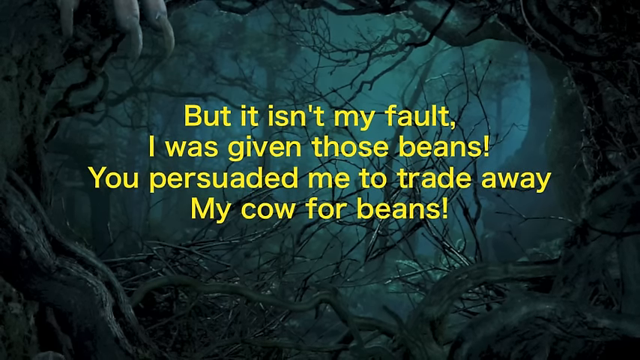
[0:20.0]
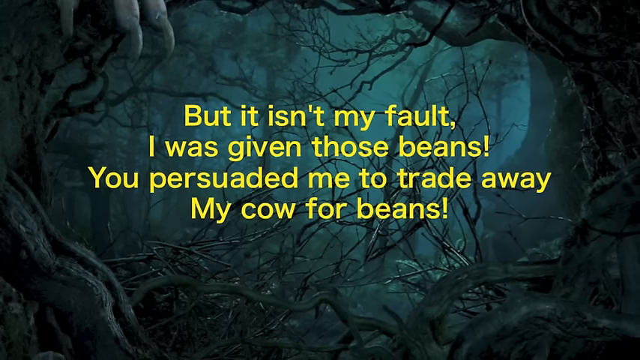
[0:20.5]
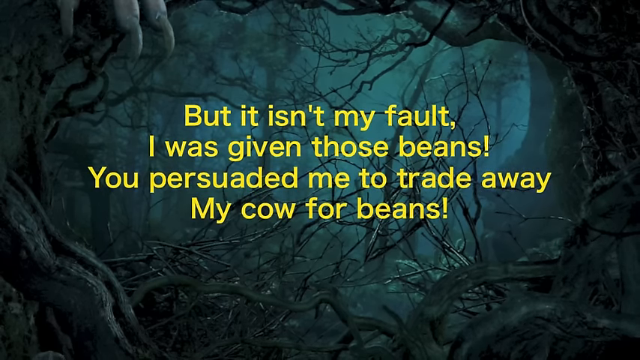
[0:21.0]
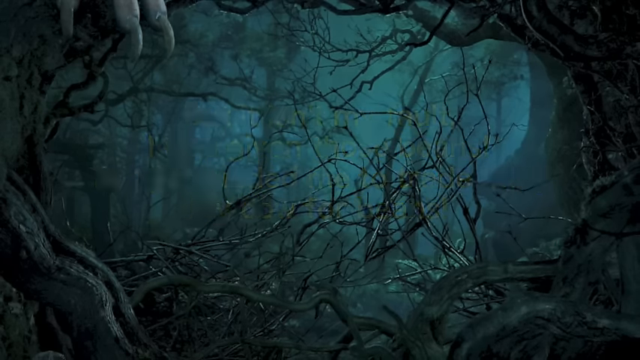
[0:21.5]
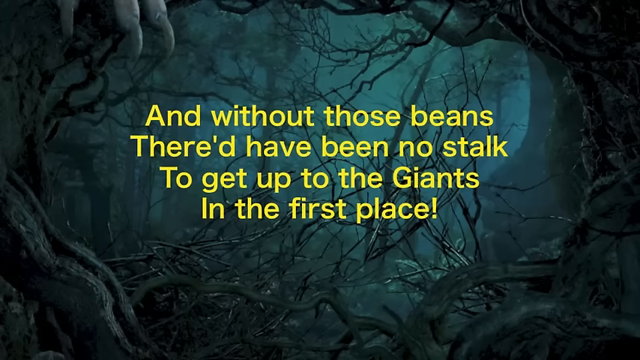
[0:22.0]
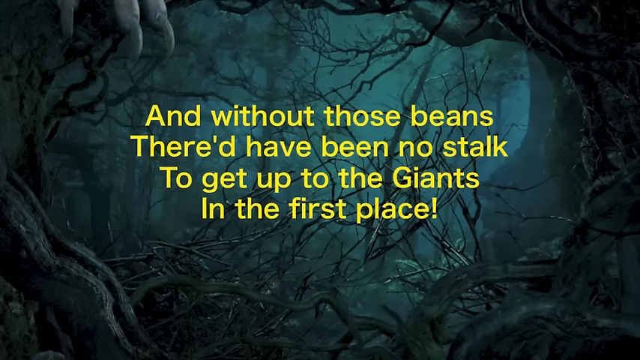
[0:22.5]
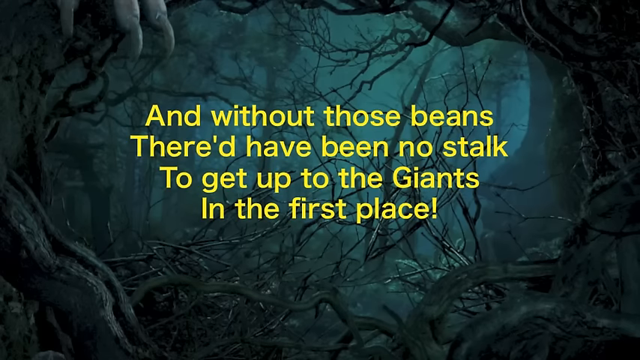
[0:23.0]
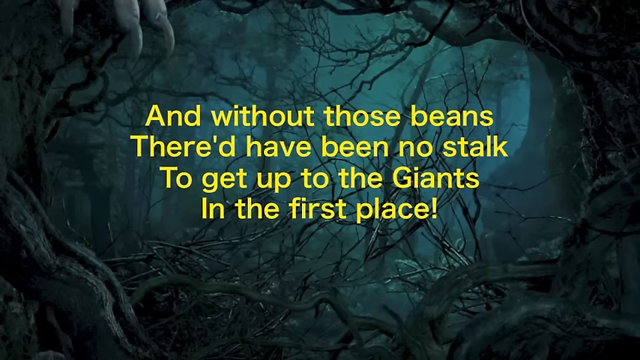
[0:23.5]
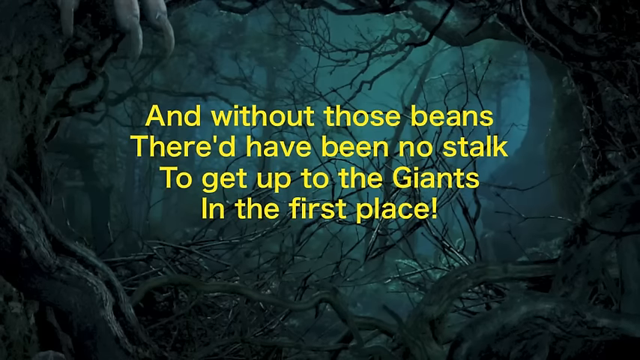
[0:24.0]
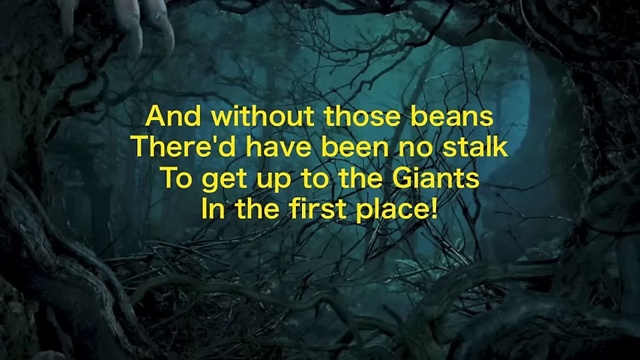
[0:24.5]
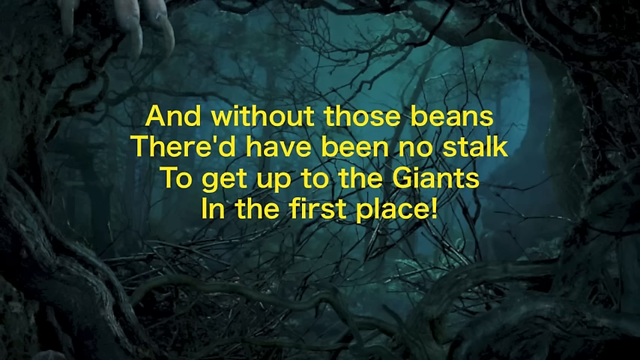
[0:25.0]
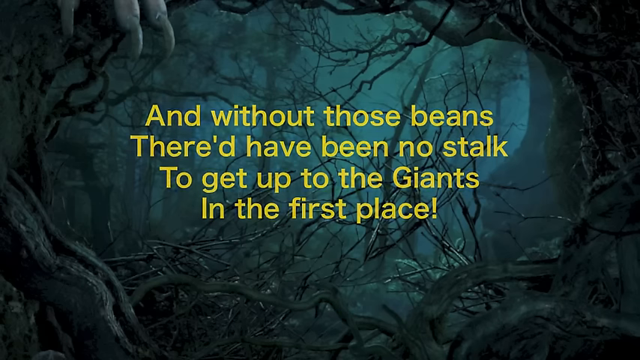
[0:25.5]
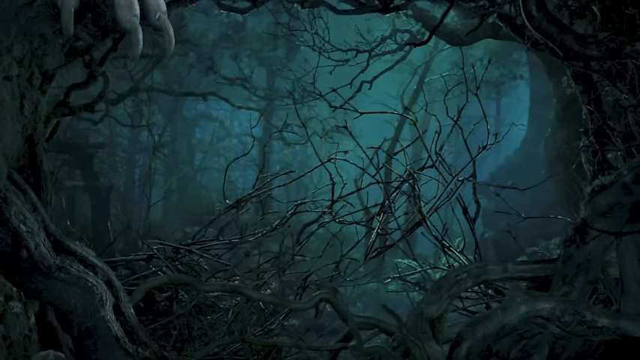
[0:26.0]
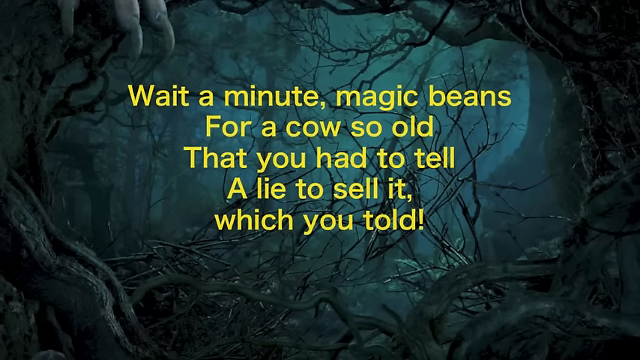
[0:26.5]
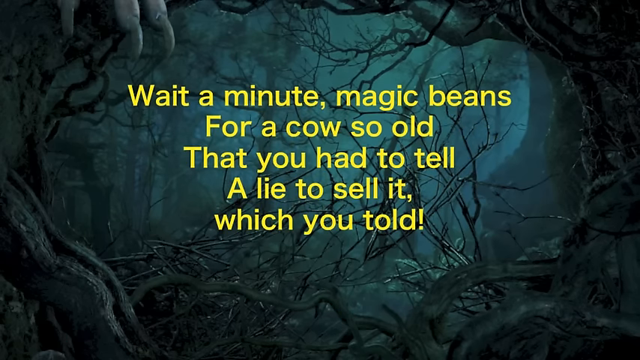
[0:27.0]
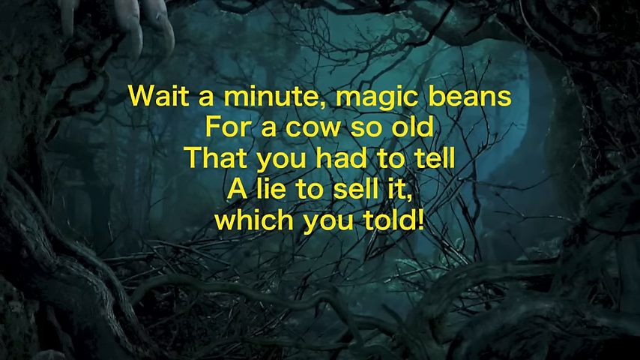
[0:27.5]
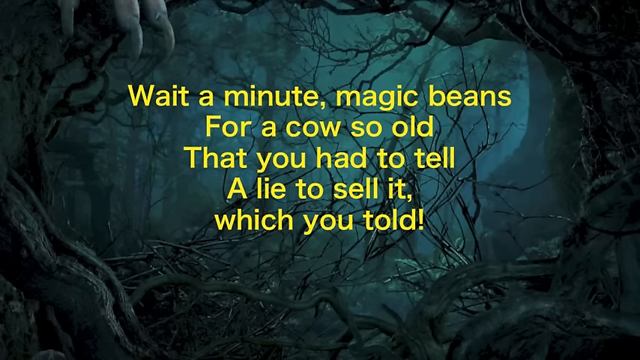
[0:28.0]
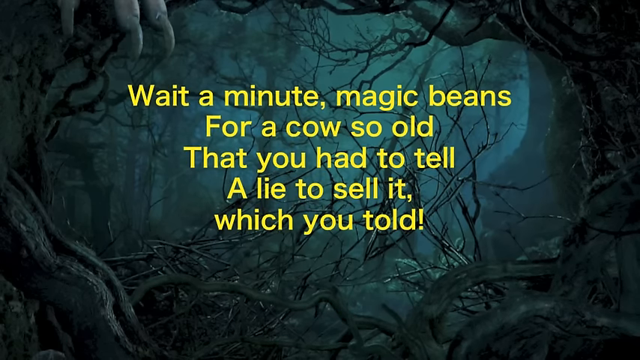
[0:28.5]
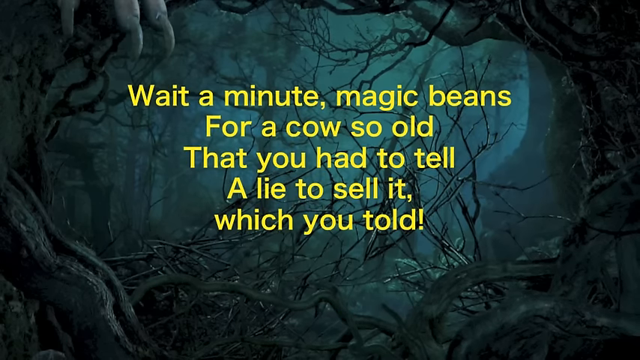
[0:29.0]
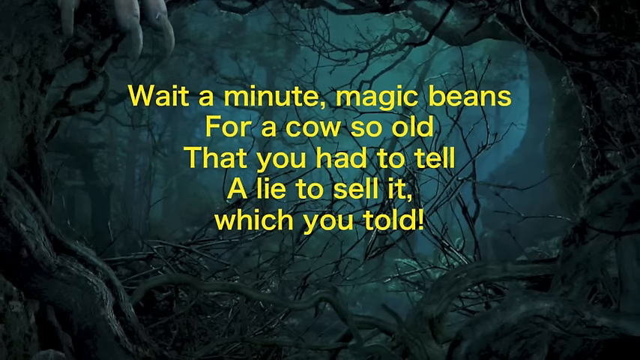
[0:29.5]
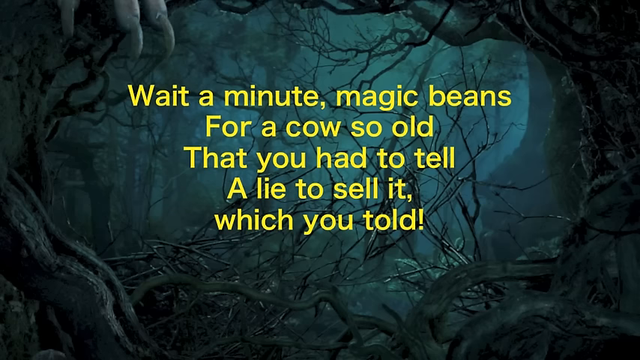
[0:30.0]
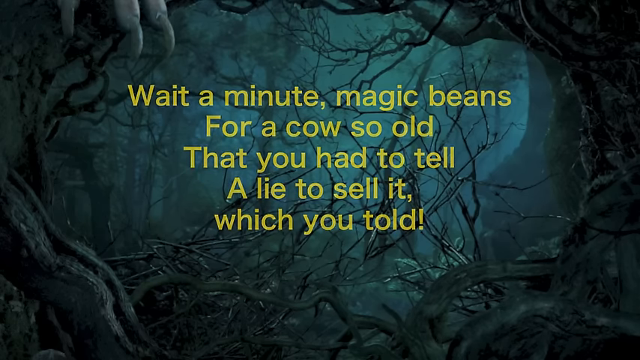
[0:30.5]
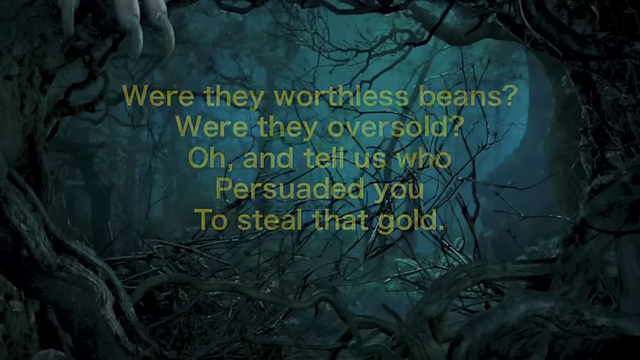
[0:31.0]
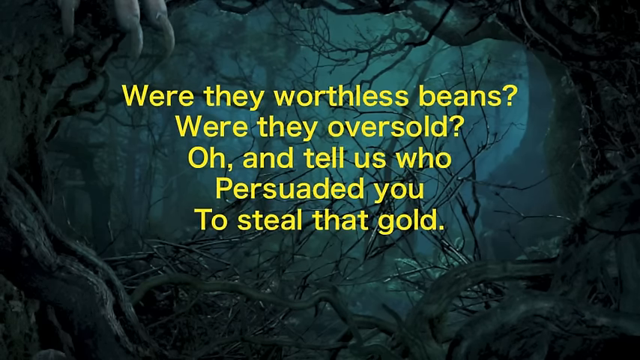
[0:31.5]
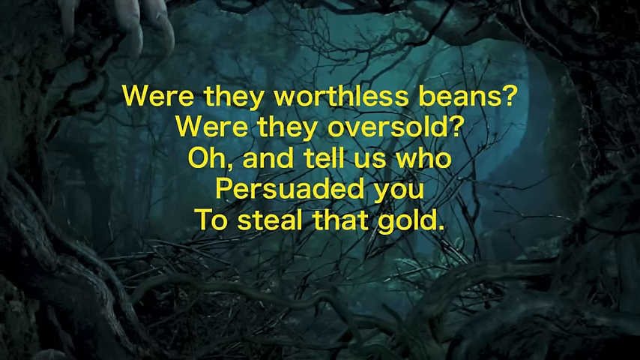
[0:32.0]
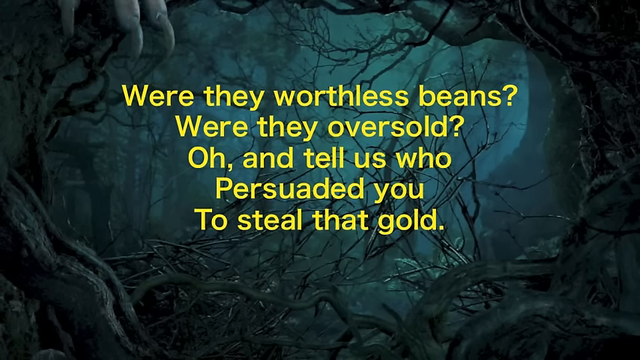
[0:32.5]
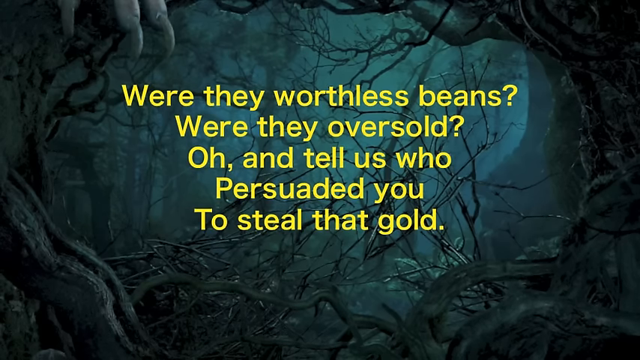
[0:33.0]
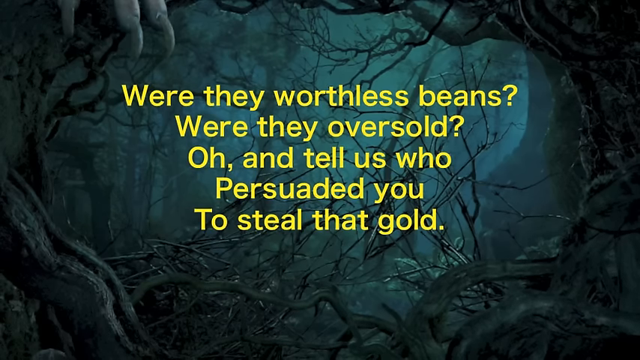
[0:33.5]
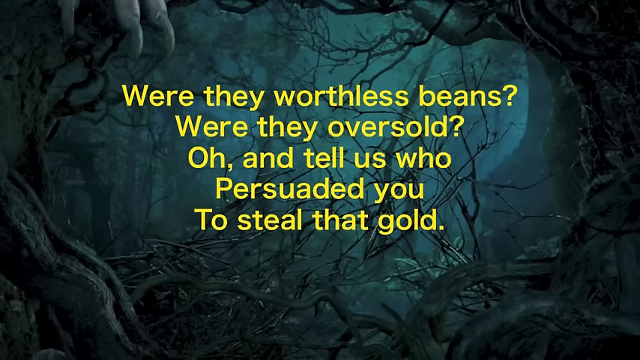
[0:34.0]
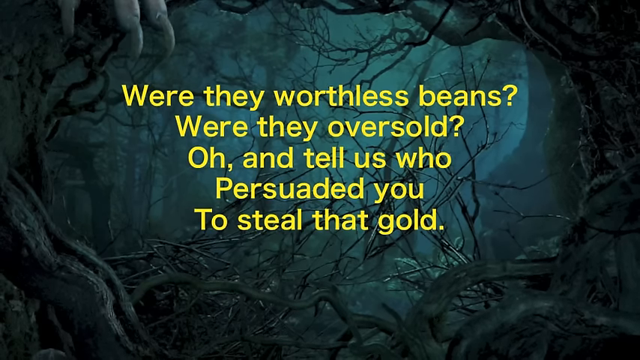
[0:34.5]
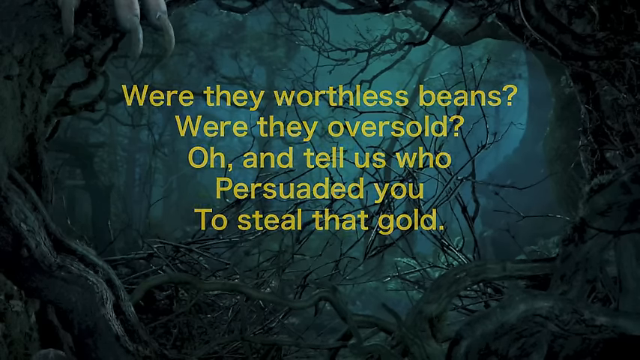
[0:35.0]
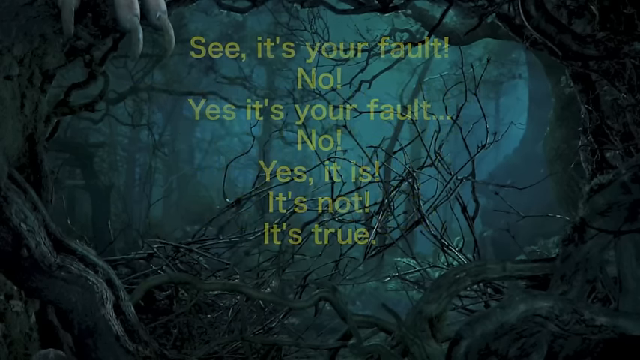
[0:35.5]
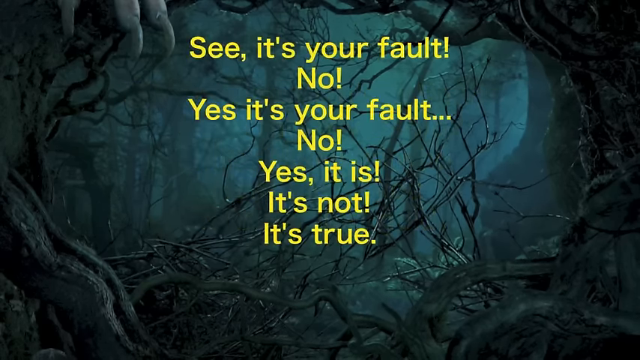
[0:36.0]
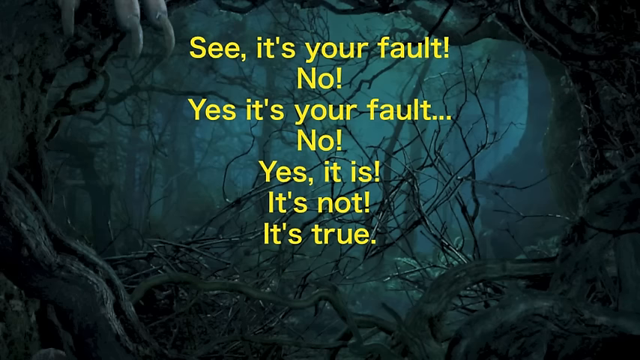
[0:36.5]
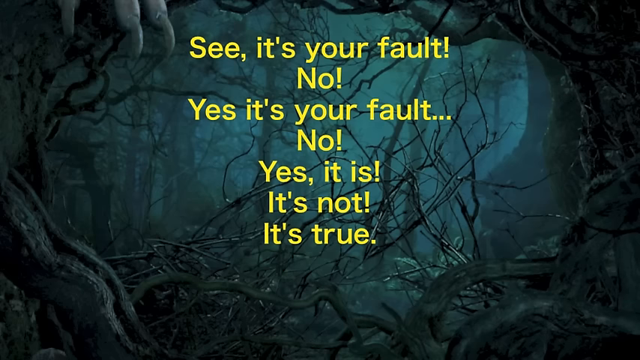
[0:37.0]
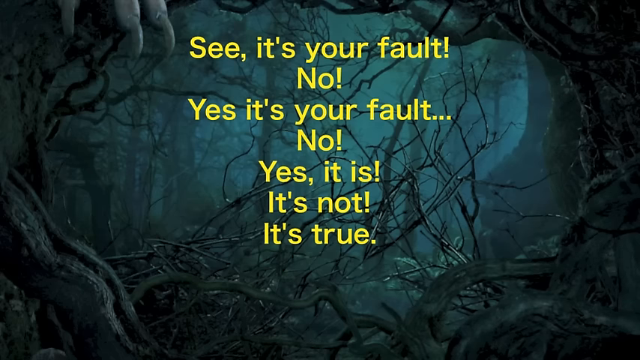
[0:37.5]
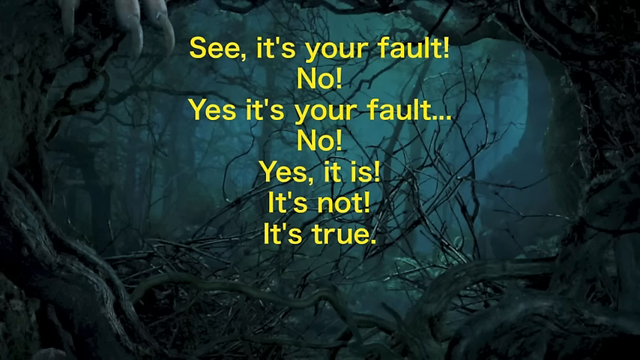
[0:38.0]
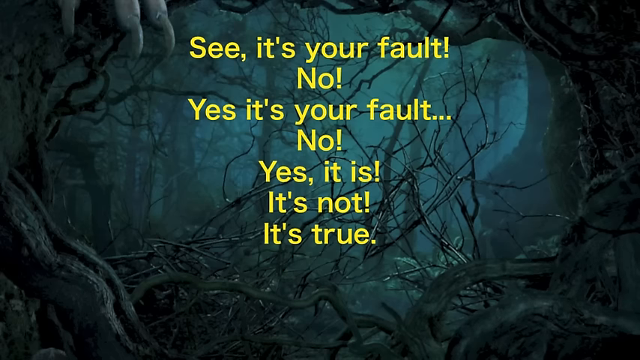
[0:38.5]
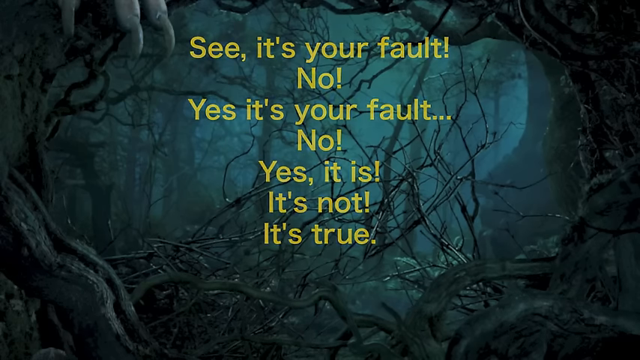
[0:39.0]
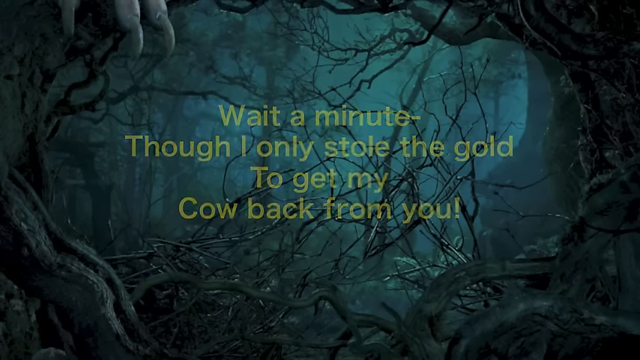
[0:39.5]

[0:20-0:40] The same dimly lit forest background with blue overtones remains. The yellow text reads "But it isn't my fault I was given those beans. You persuaded me to trade my cow for beans." It continues with lines including "Wait a minute, magic beans for a cow so old that you had to tell a lie to sell it, which you told.", "Were they oversold? Oh, and tell us who persuaded you to steal that gold. See, it's your fault. No. Yes, it's your fault. No. Yes, it is. No, it's not. It's true." and "Wait a minute... Though I only stole the gold to get my cow back from you." There are no other images or graphics; the background stays static while the text is shown.